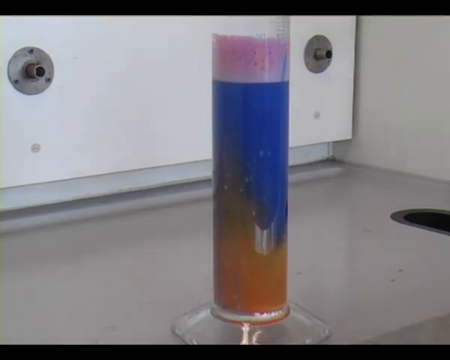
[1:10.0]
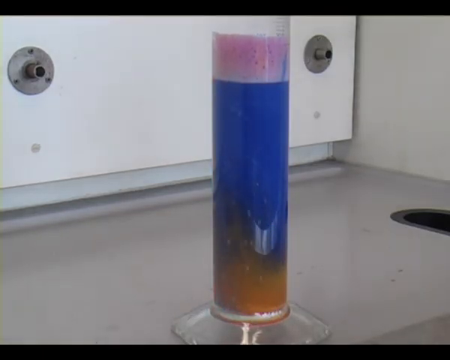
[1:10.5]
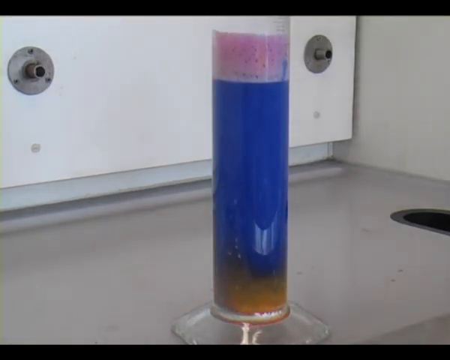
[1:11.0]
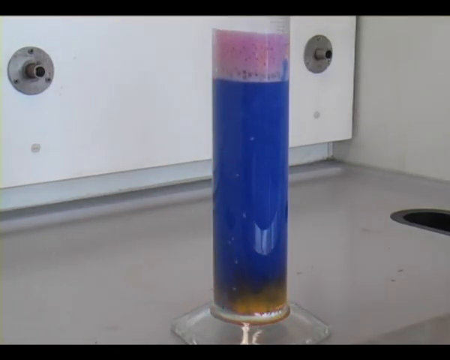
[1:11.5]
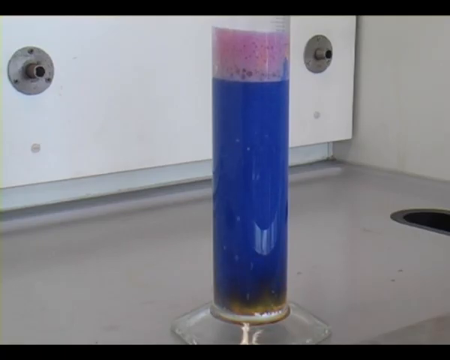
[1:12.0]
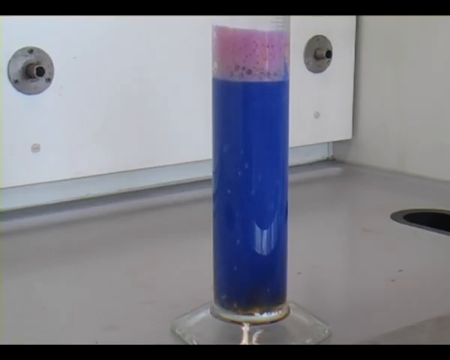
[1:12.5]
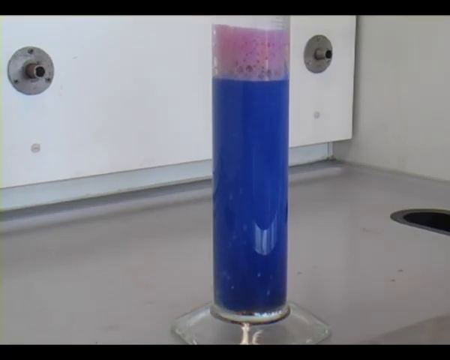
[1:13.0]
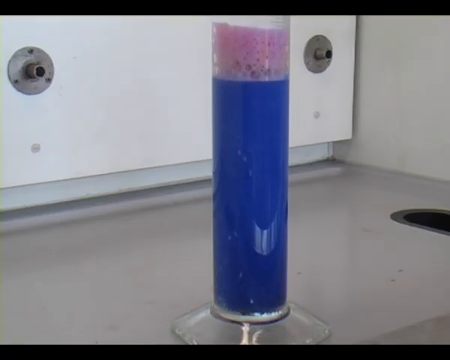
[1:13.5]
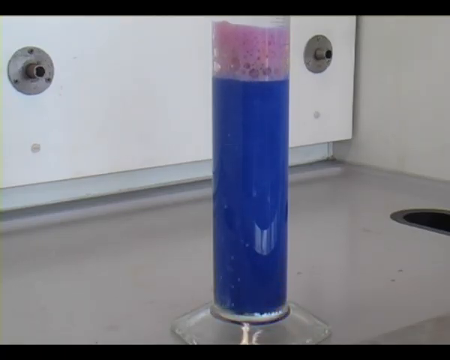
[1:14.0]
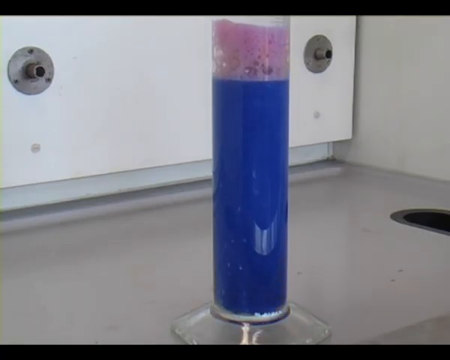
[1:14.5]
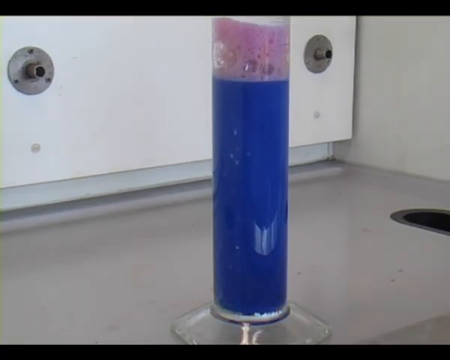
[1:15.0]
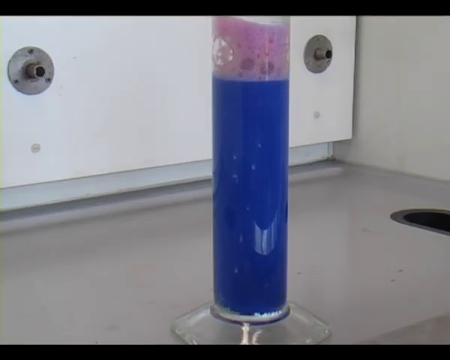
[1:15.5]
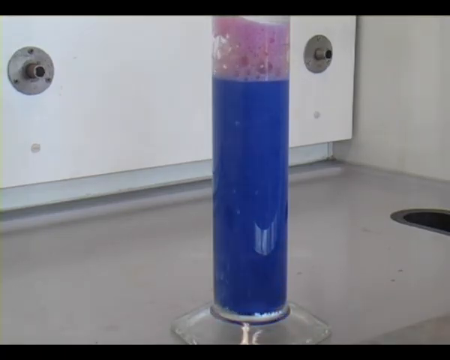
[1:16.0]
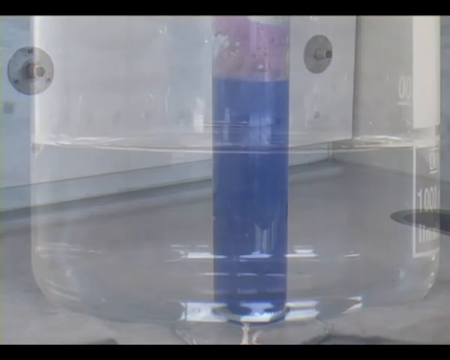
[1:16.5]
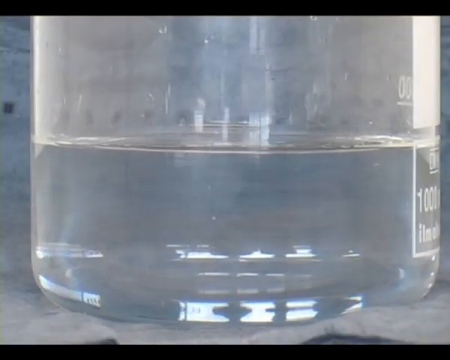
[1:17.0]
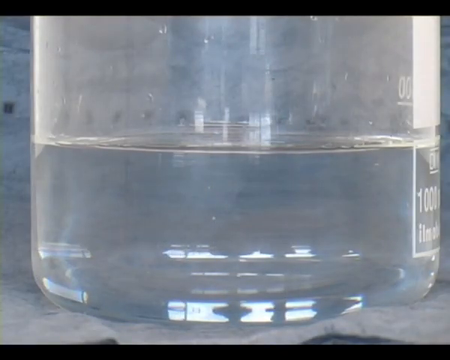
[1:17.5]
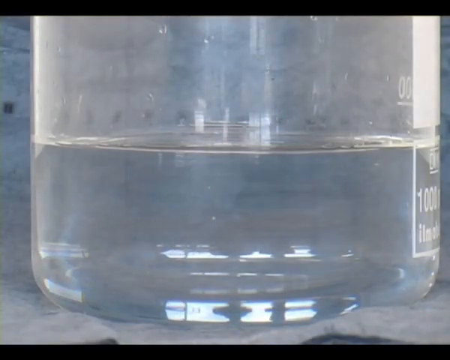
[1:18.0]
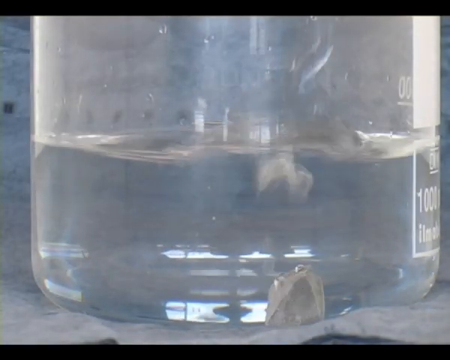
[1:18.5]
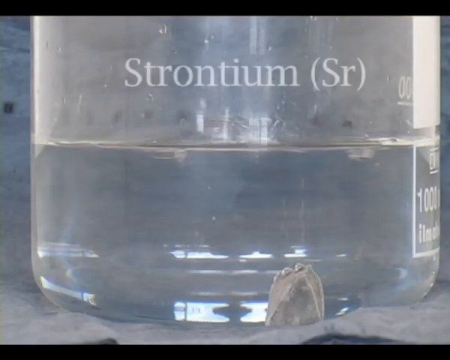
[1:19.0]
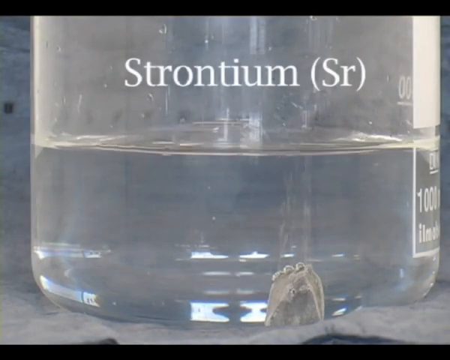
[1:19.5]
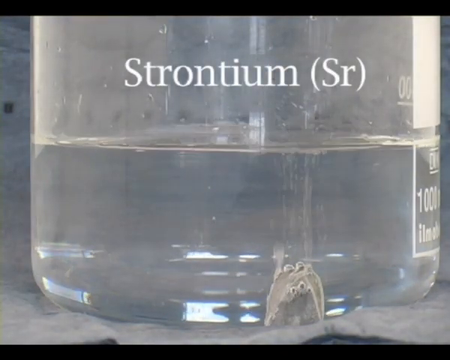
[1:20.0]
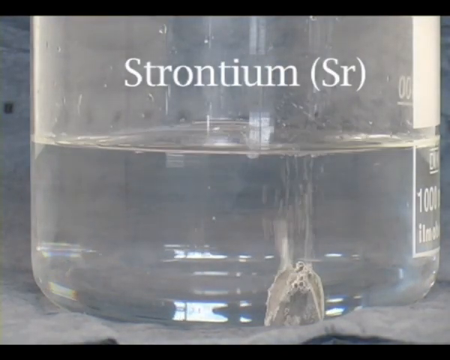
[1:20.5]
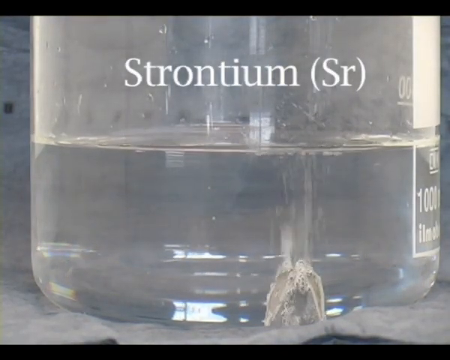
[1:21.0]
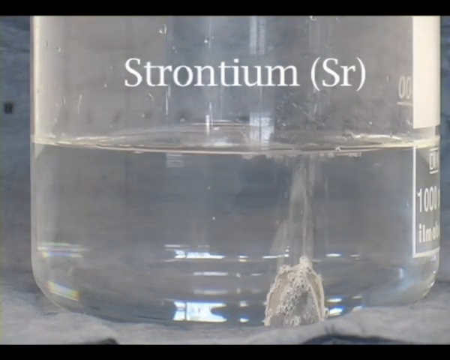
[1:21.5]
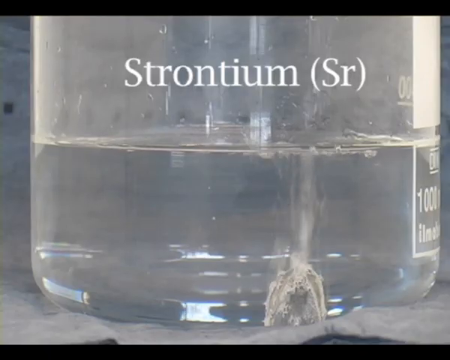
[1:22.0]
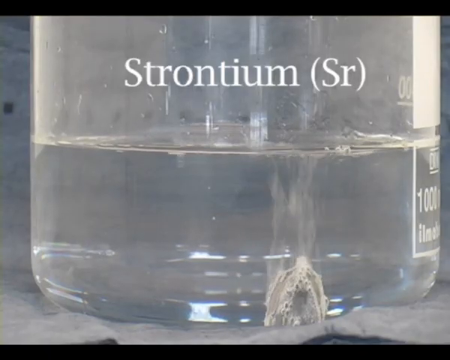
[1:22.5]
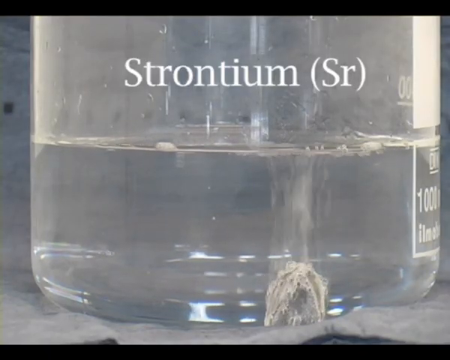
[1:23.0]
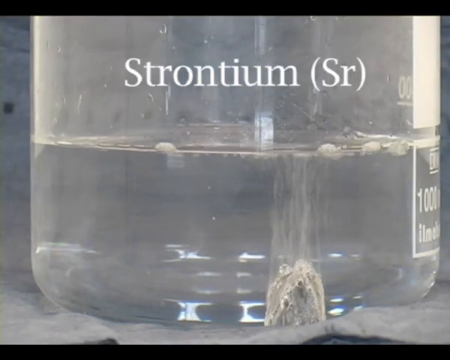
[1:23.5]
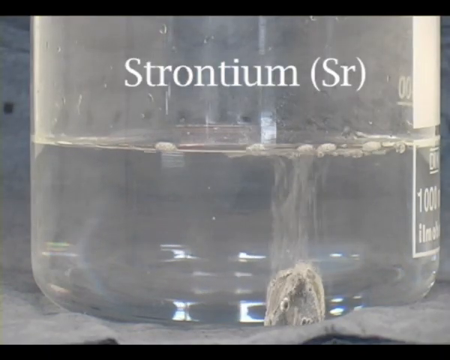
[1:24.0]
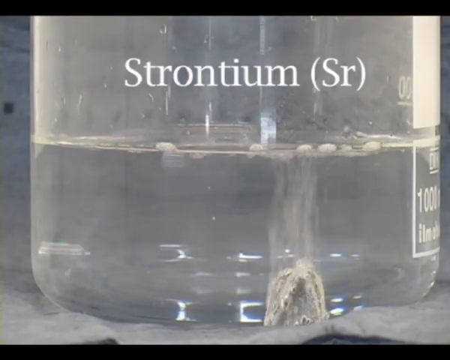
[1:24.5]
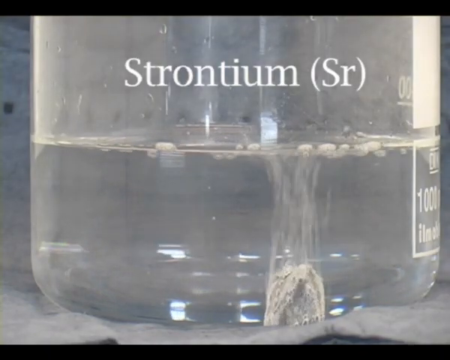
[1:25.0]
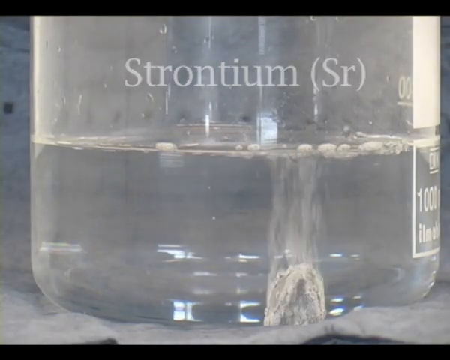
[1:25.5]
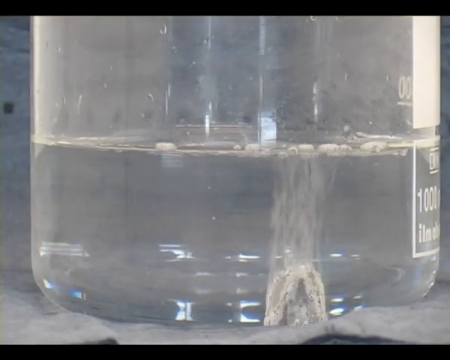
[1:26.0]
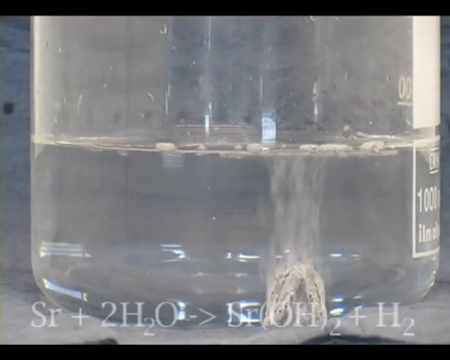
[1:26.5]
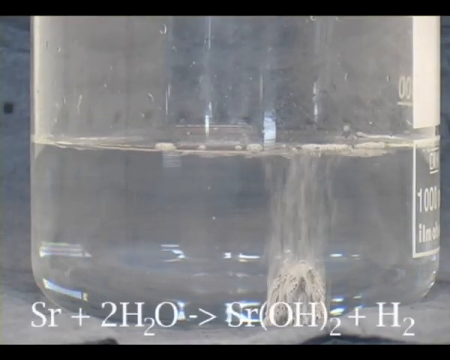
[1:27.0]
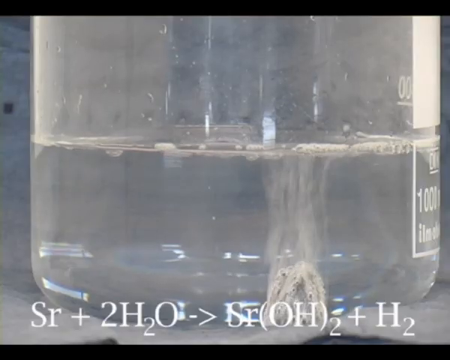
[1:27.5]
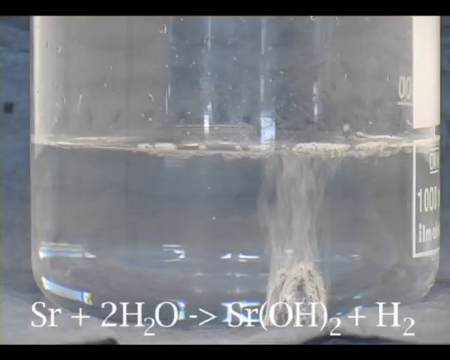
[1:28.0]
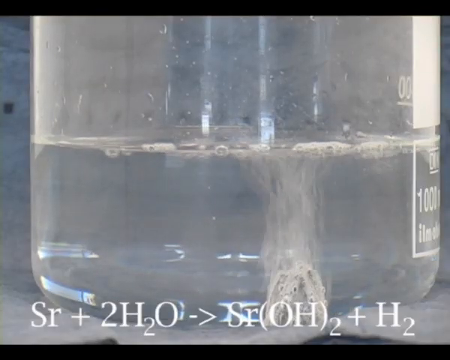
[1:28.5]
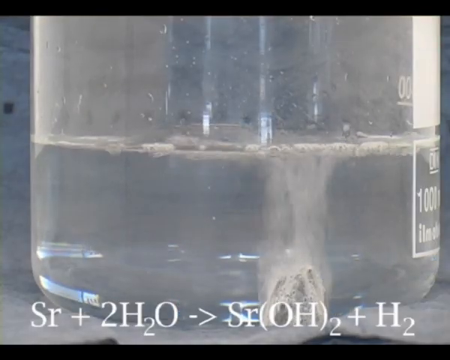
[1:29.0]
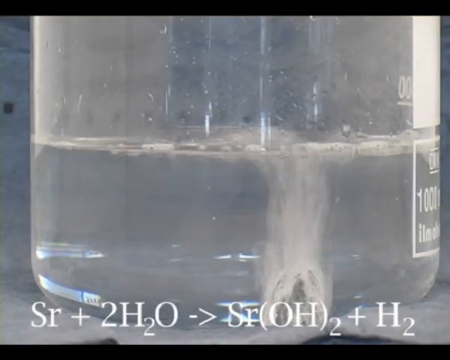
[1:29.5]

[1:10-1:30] The little glass canister keeps changing color, turning blue throughout. It is still reacting, with pieces of what appears to be calcium moving around in the container, and the bubbles are still kind of pinkish purple. The scene then cuts to a close-up of some liquid in a canister, identified as strontium, Sr. A big glob, almost like a little rock, is dropped into the liquid, where it begins to disintegrate and foam up, with bubbles rising as it reacts. The formula "Sr + 2H2O -> Sr(OH)2 + H2" appears, showing almost the same experiment using strontium instead of calcium.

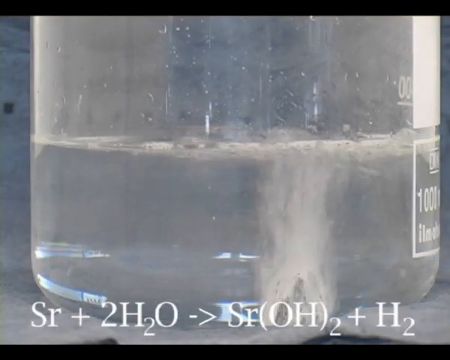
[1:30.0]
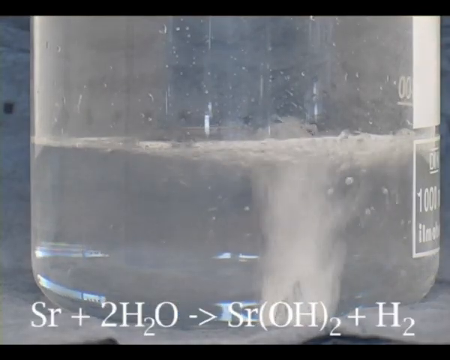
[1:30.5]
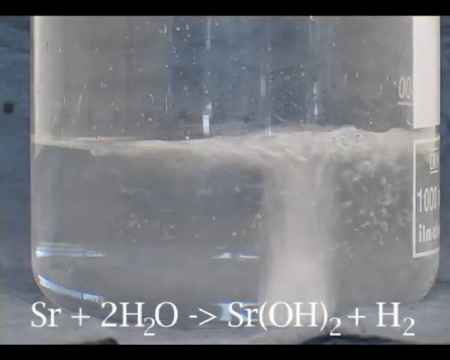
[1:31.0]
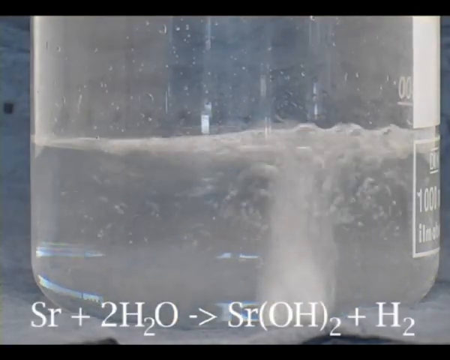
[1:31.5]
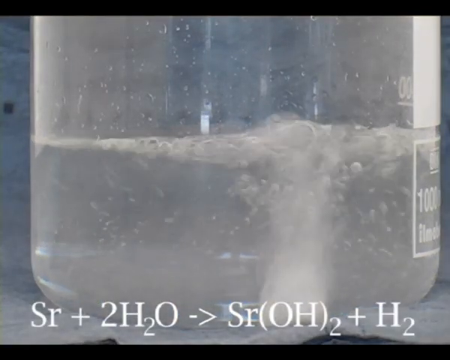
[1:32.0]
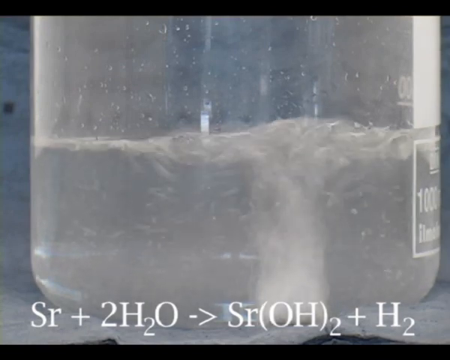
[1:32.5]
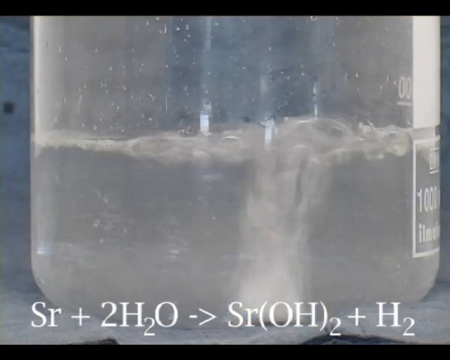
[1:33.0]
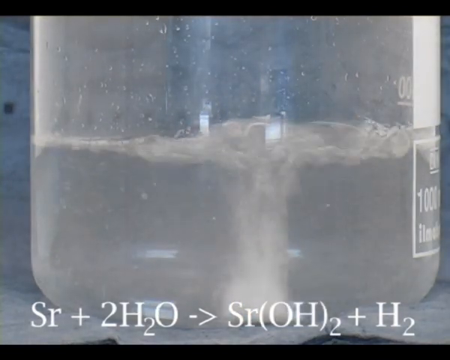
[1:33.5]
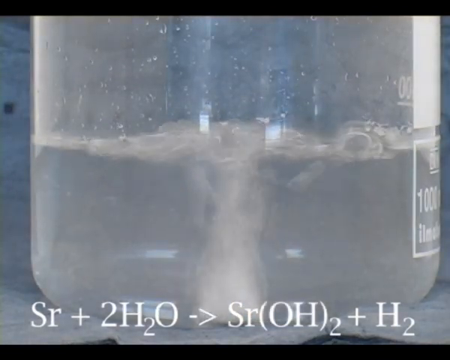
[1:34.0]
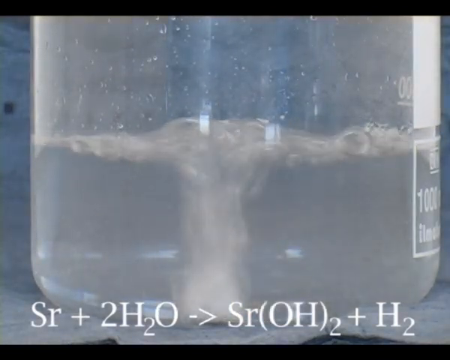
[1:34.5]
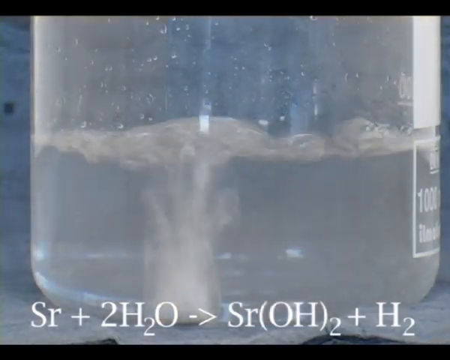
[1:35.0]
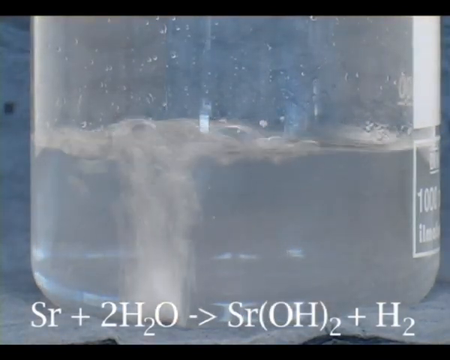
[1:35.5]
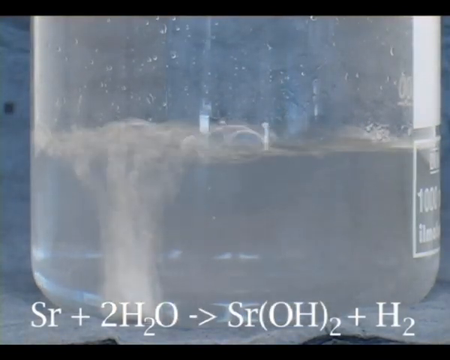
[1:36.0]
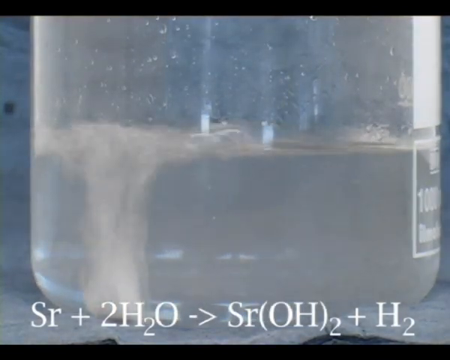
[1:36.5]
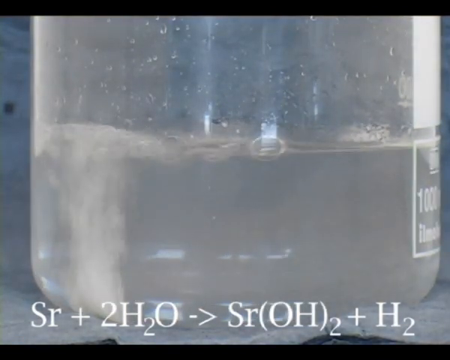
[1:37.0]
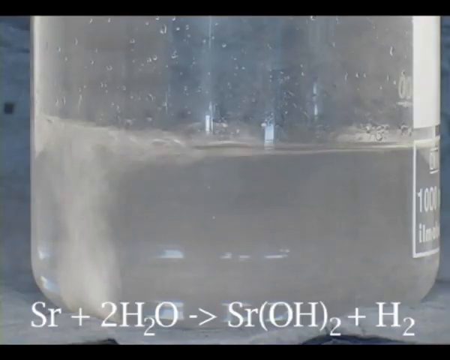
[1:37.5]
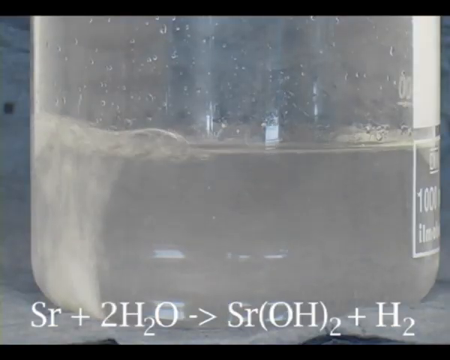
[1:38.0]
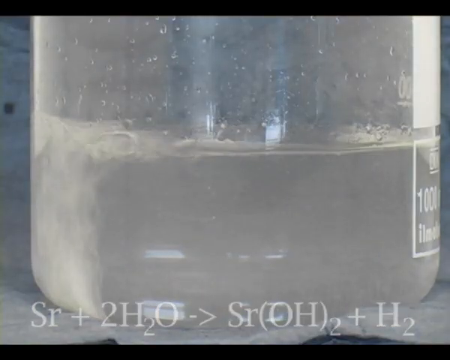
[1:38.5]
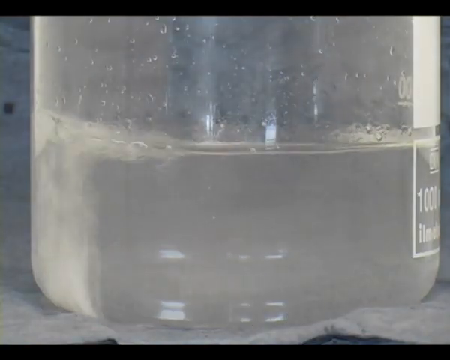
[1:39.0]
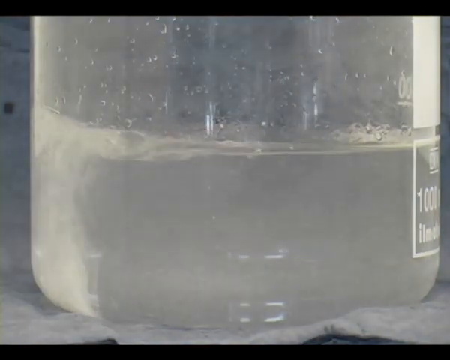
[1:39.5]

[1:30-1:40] Strontium is in a decent amount of water, with the formula "Sr + 2H2O -> Sr(OH)2 + H2" shown. The reaction is vigorous, with the strontium bubbling heavily and seeming almost to disintegrate quickly in the water. Lots of bubbles make it look like it is boiling. The strontium moves from the right side of the glass toward the left, bubbling the entire time. In the background, not very clearly, a standing figure is visible as a reflection in the glass.